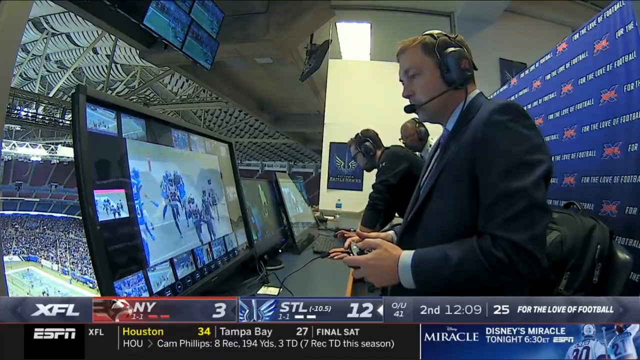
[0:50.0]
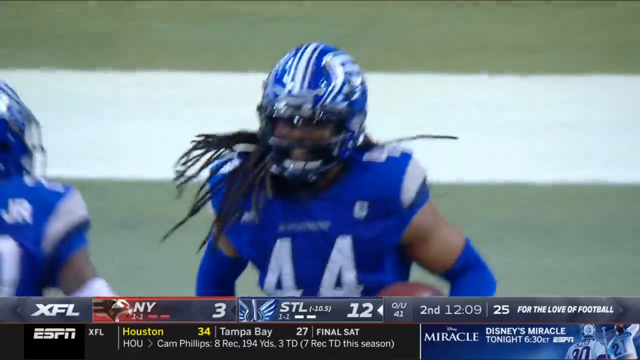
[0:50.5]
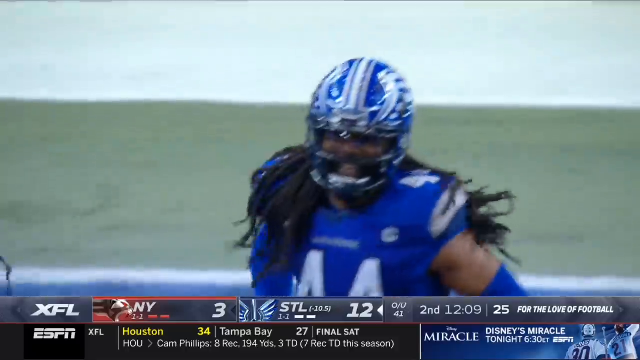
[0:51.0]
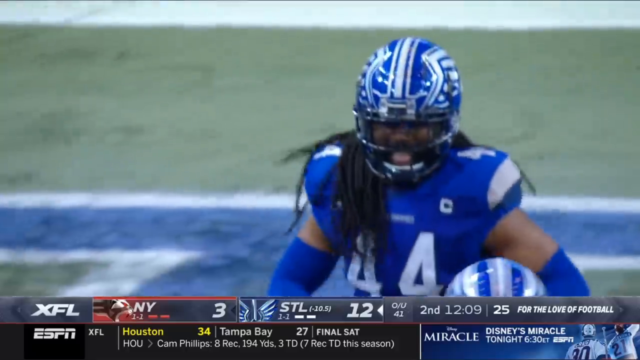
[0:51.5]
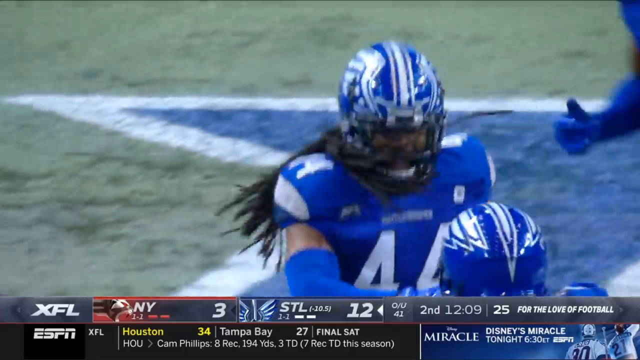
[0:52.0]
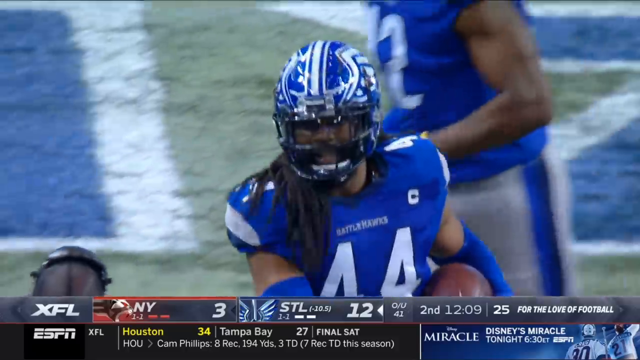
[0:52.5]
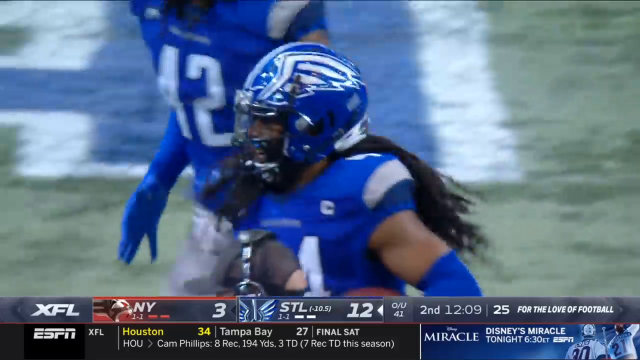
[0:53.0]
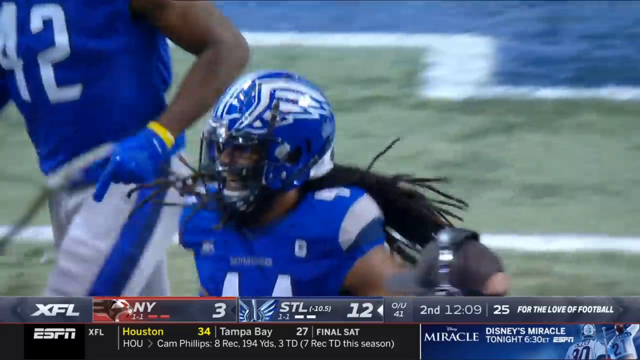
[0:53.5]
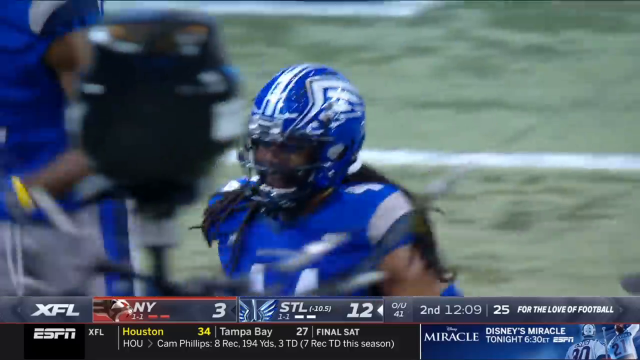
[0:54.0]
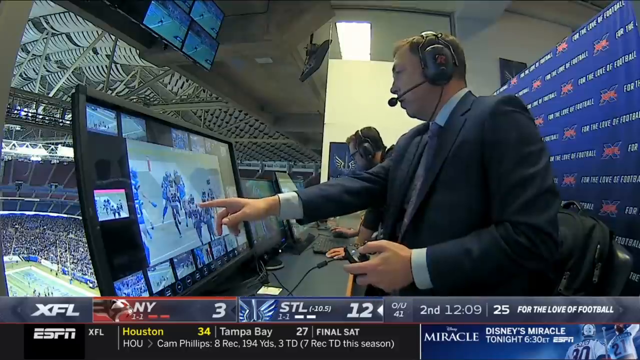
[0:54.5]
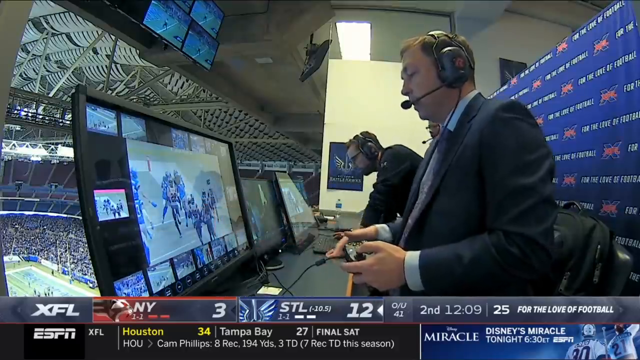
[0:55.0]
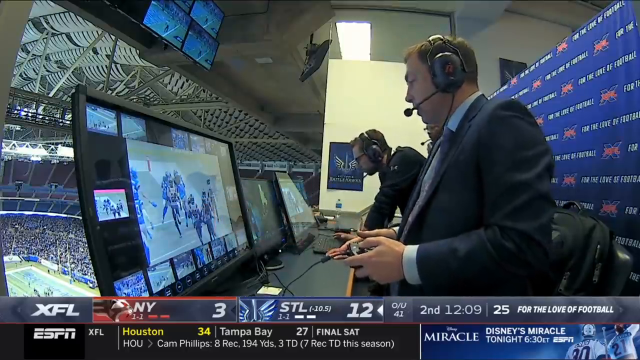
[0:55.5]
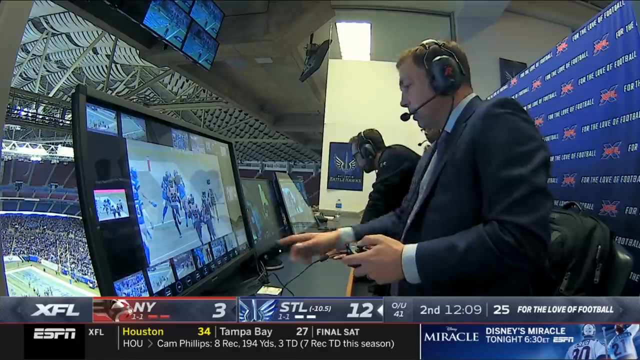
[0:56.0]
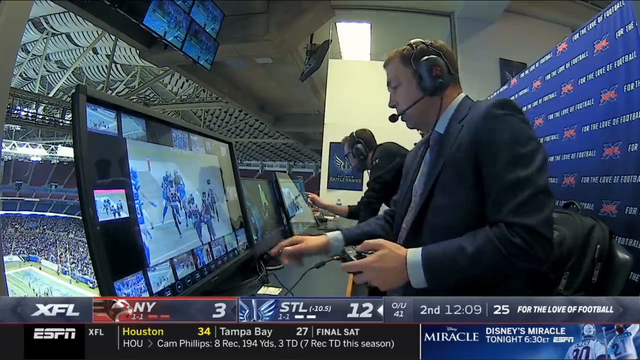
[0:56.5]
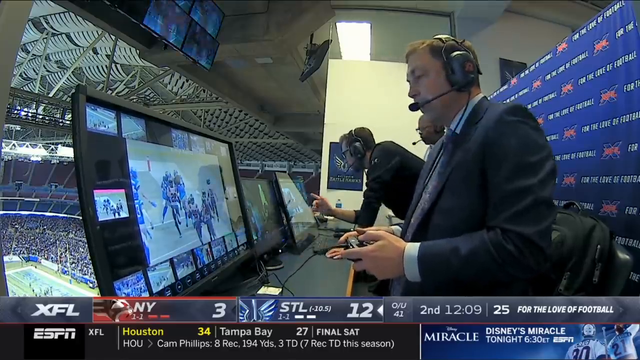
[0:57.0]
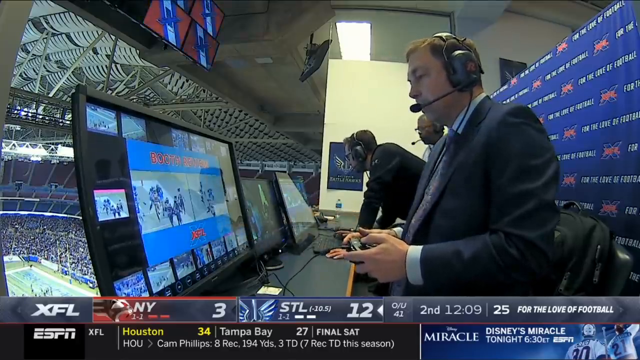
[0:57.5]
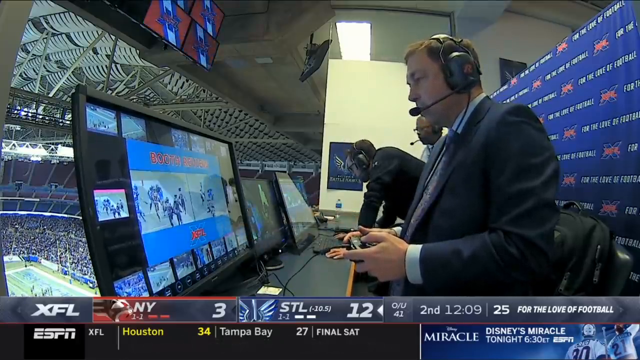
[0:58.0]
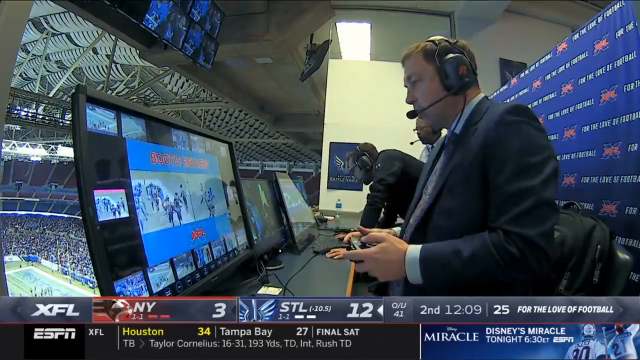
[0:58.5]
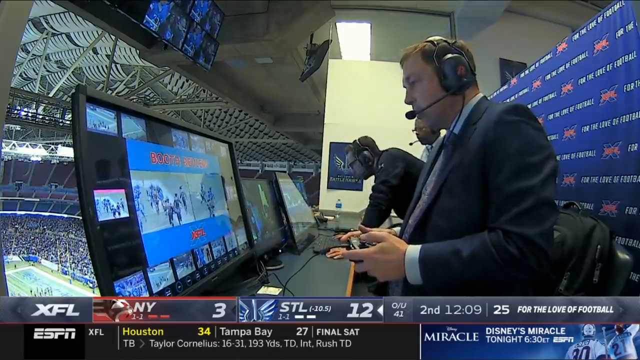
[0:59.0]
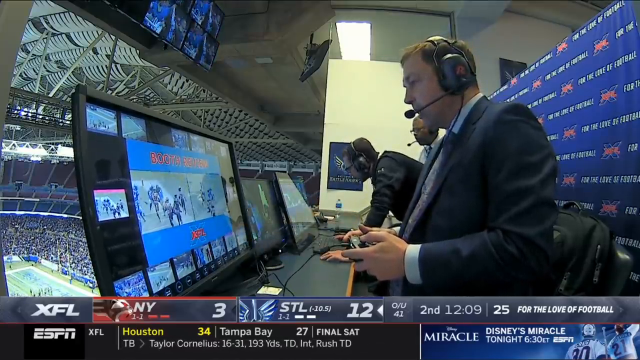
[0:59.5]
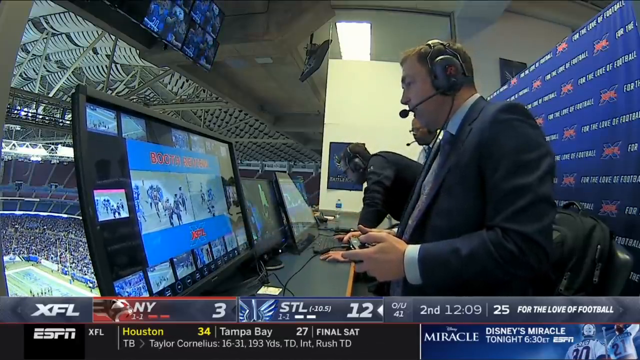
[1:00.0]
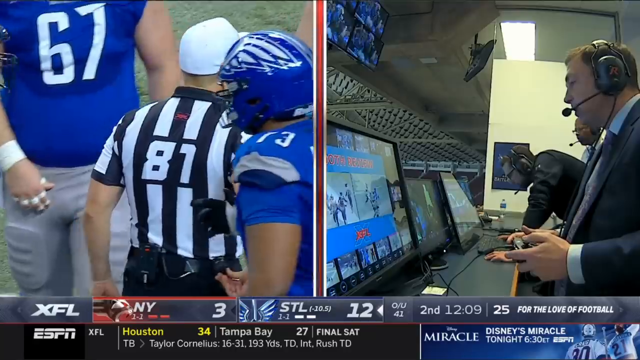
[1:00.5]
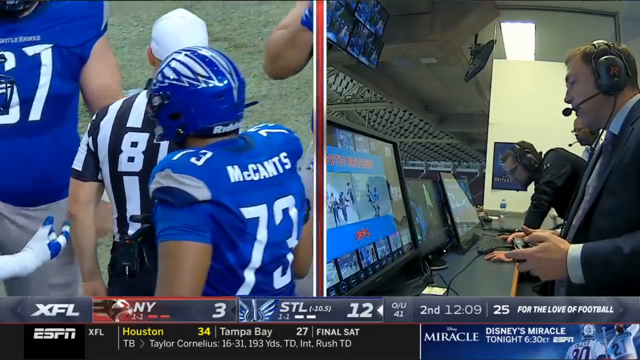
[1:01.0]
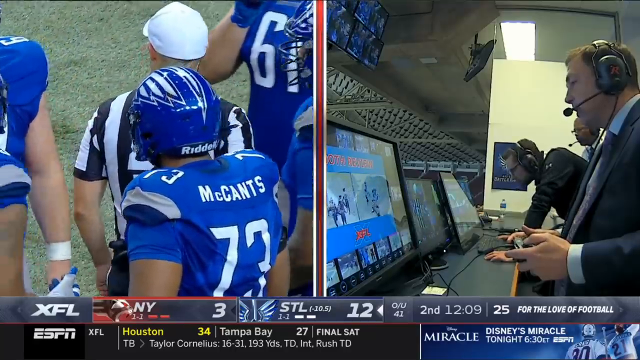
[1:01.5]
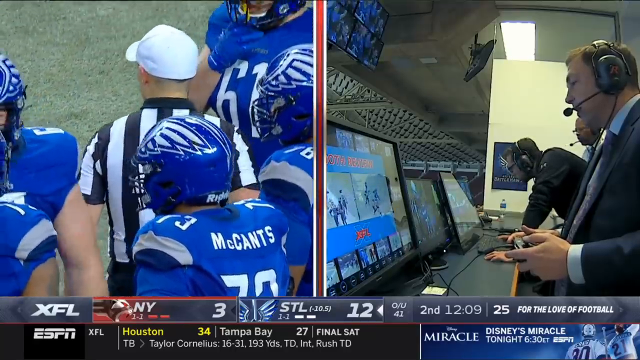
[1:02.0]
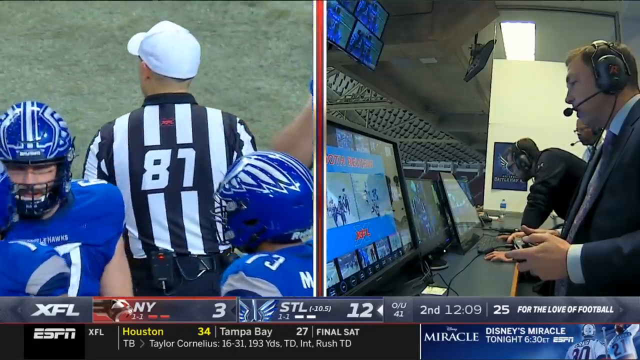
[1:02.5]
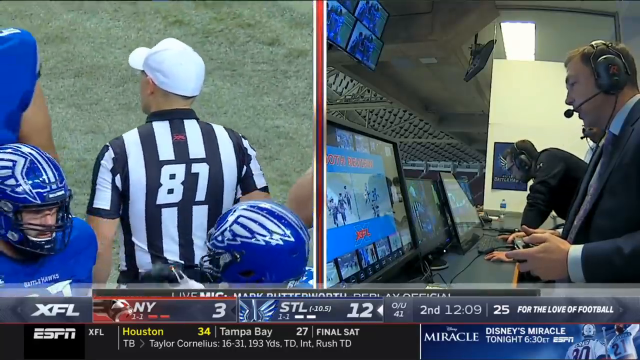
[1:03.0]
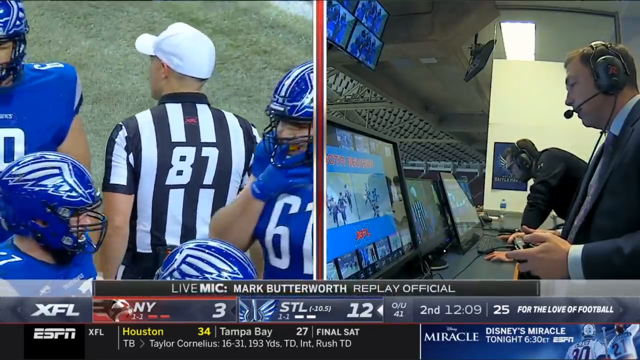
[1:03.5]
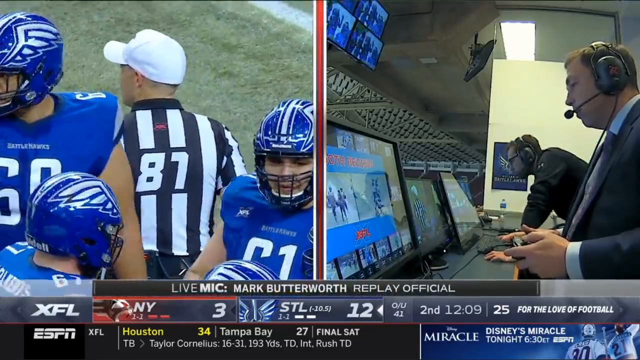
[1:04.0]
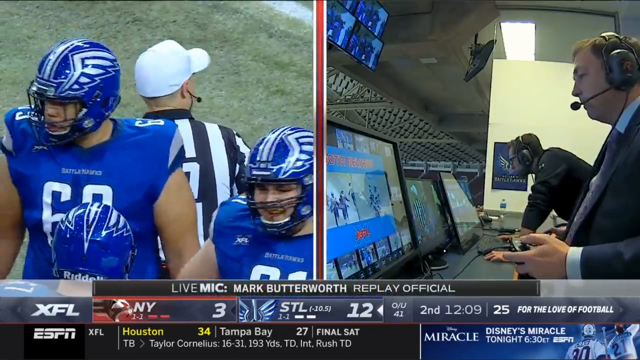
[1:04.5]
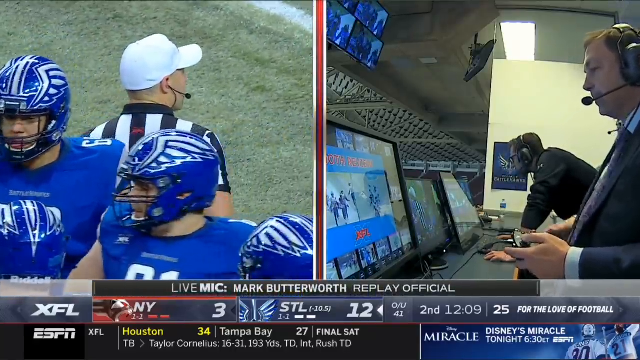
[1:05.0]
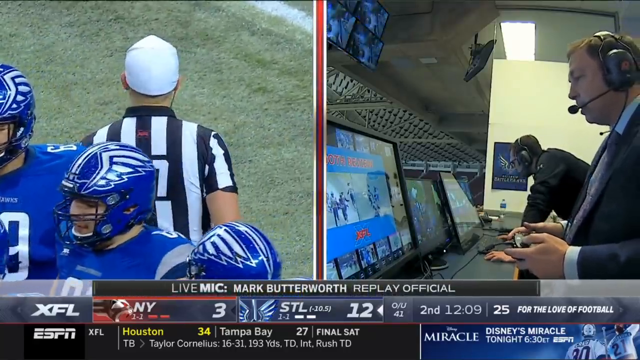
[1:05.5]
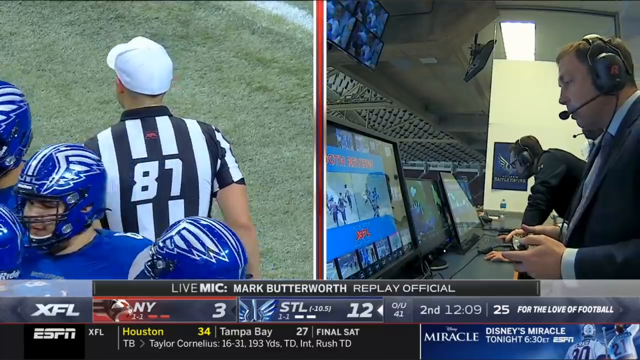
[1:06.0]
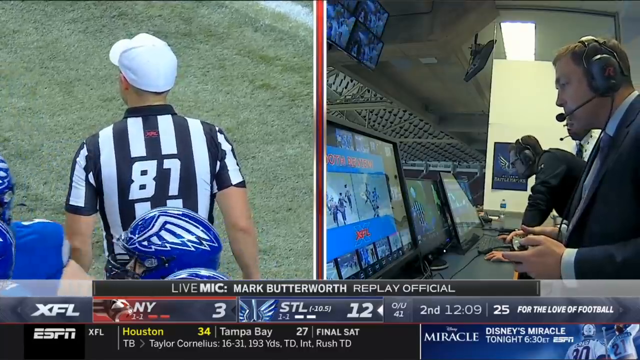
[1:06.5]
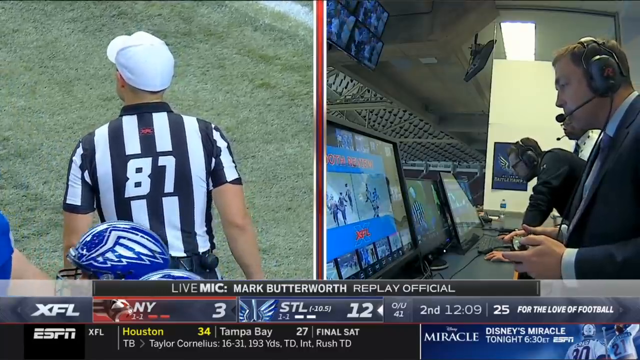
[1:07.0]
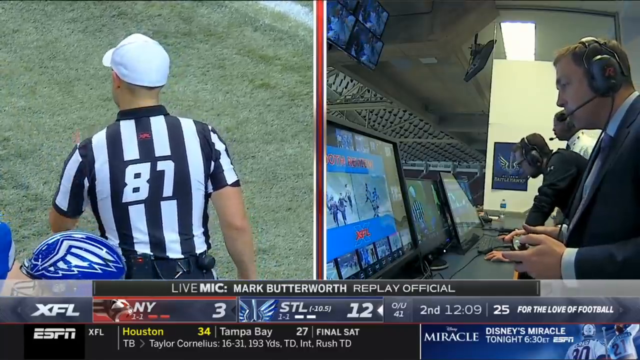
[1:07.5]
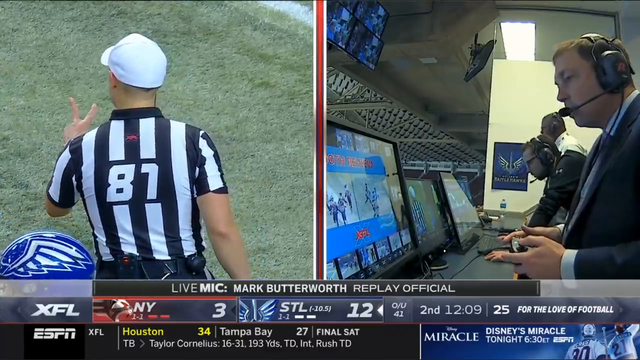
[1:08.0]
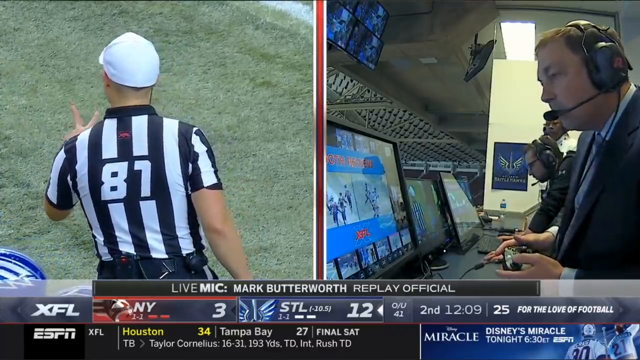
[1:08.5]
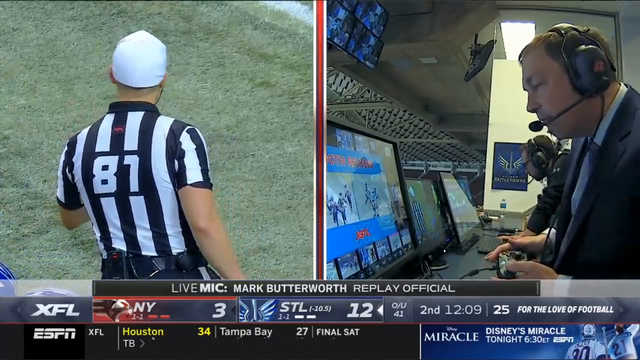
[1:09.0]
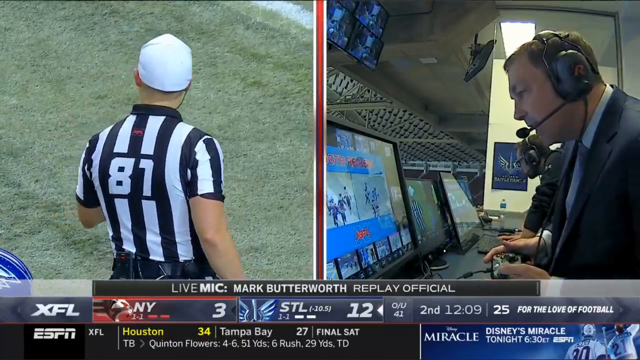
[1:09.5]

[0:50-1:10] A football game is shown, apparently involving the Battle Hawks; the other team is unidentified. The team in black, white and red kicks off to the team in blue and white, and a player runs for a touchdown and scores. The fans cheer, and three fans wearing hawk costumes cheer. The players cheer and jump all over each other. A sportscaster is shown up at the very top of the football field, and then a split screen shows a referee in a black and white striped shirt, white hat and black pants, with 81 on his jersey. He walks around and talks, backs up and throws his hand down. The team goes for the extra points and misses. A lady interviews the player who scored the touchdown, who wears jersey number 44. A replay of the touchdown follows and goes into slow motion, ending the video.